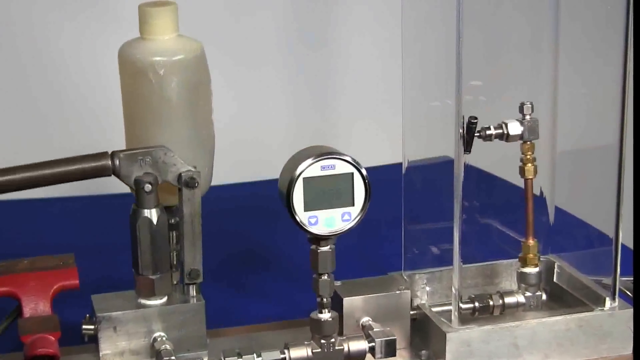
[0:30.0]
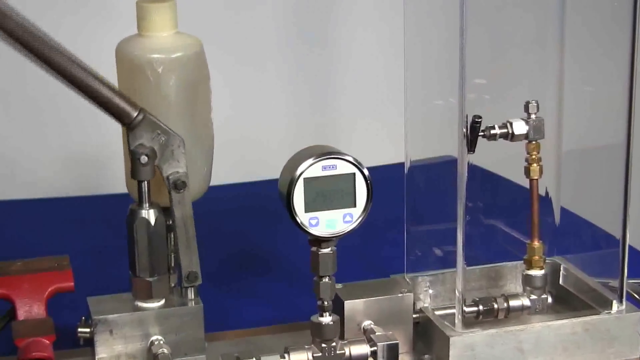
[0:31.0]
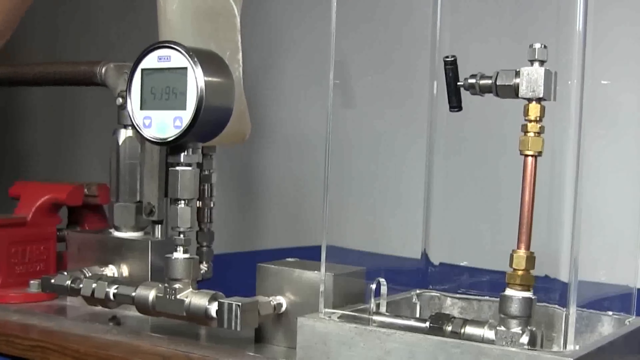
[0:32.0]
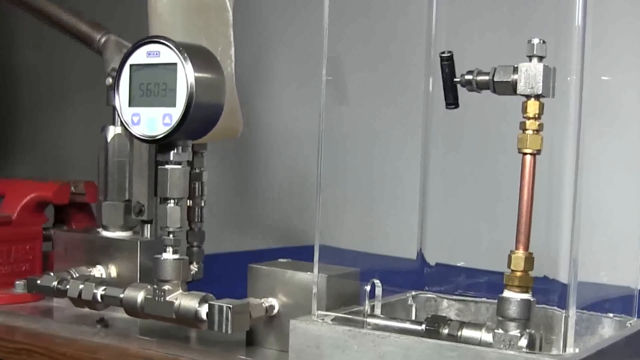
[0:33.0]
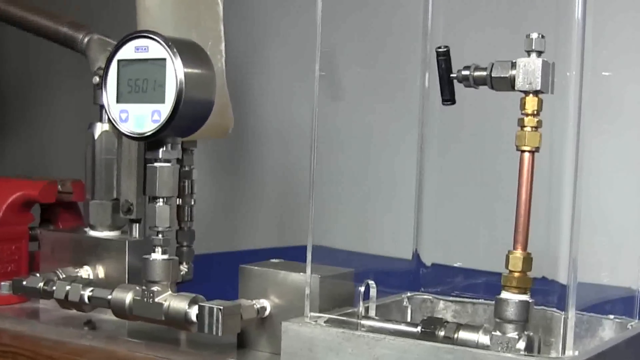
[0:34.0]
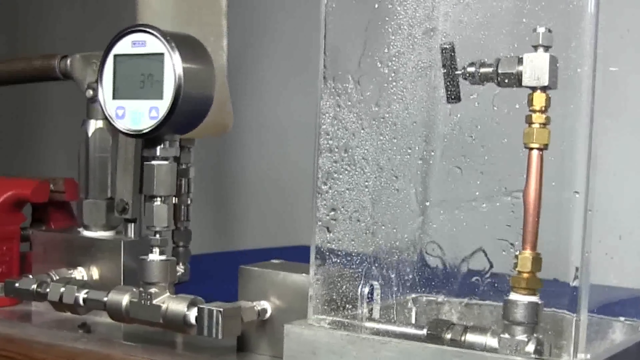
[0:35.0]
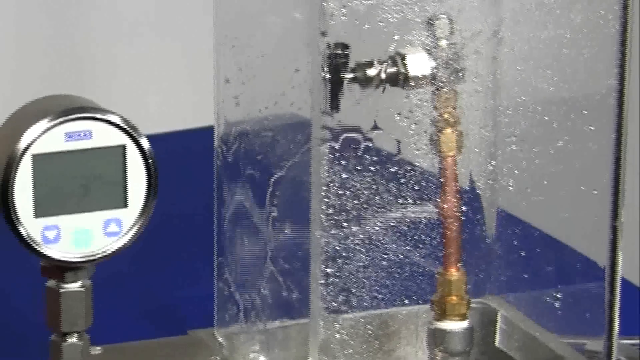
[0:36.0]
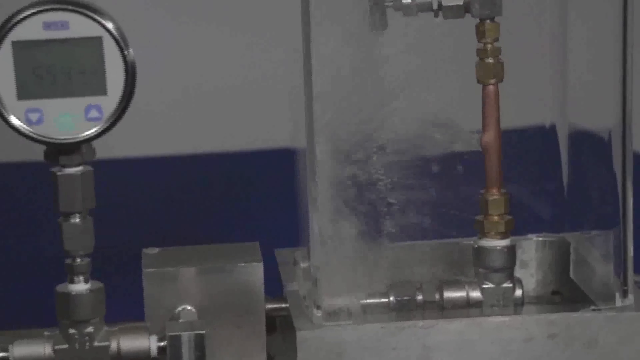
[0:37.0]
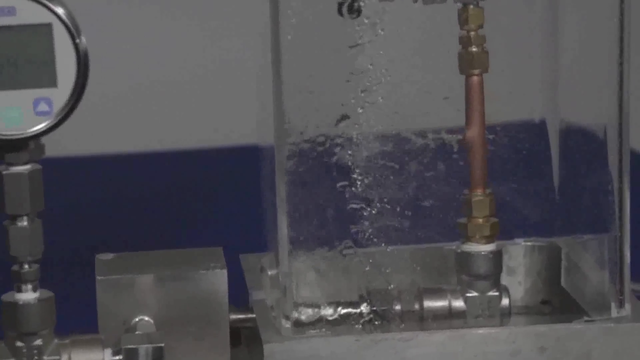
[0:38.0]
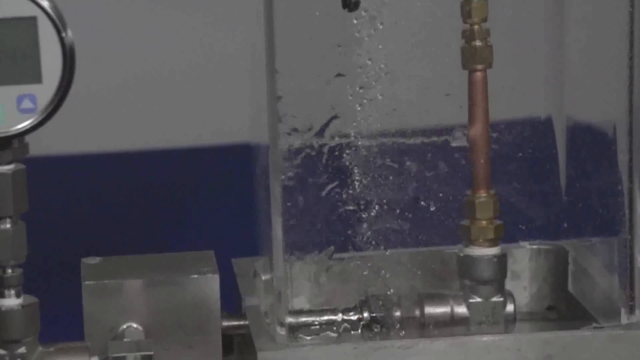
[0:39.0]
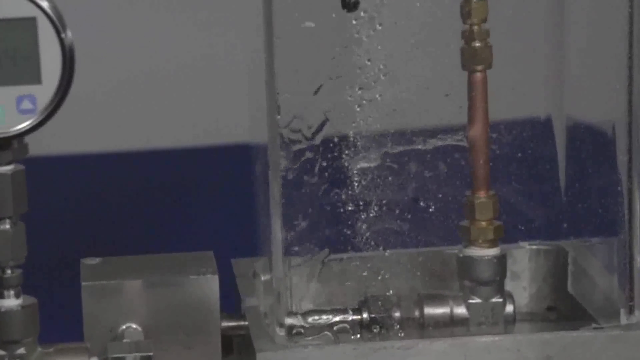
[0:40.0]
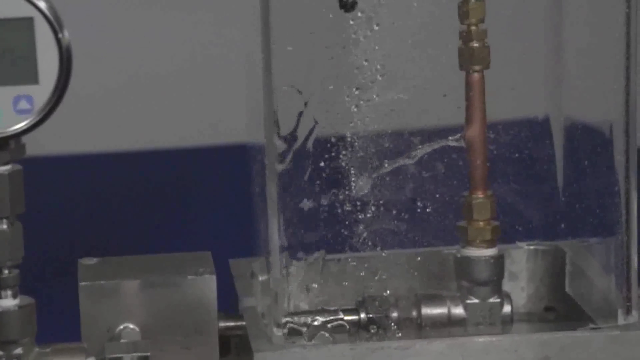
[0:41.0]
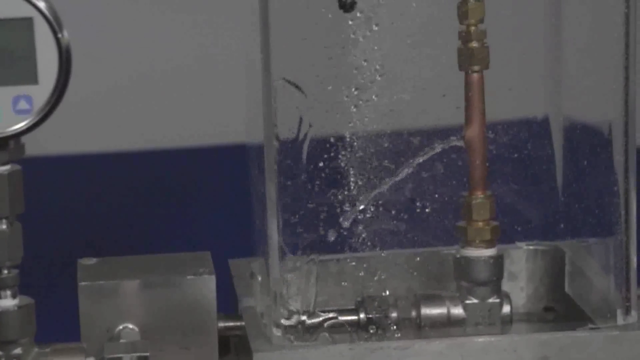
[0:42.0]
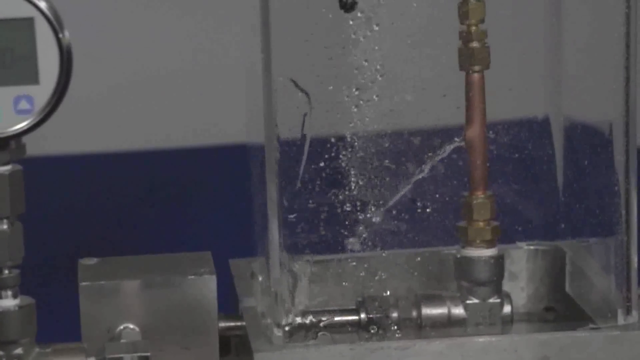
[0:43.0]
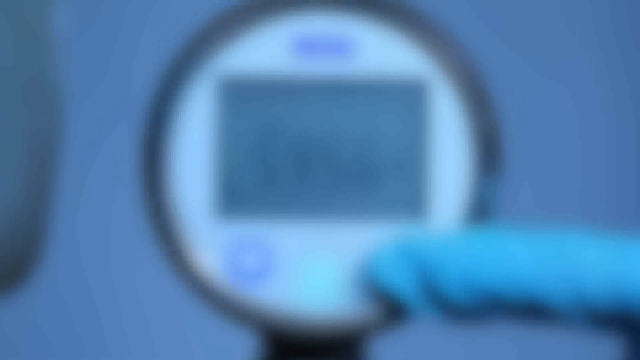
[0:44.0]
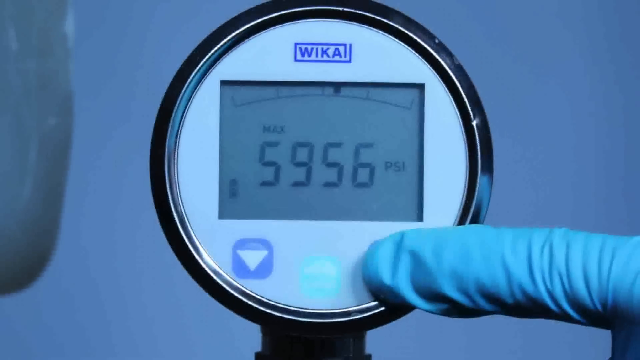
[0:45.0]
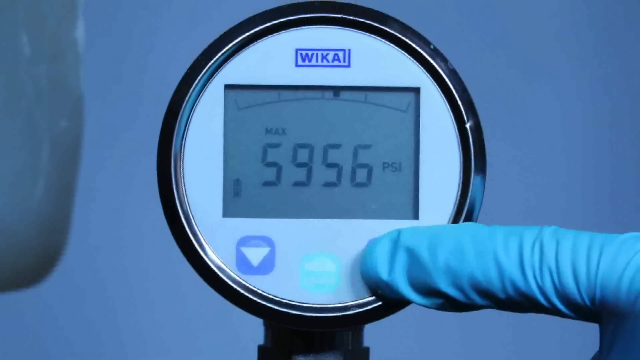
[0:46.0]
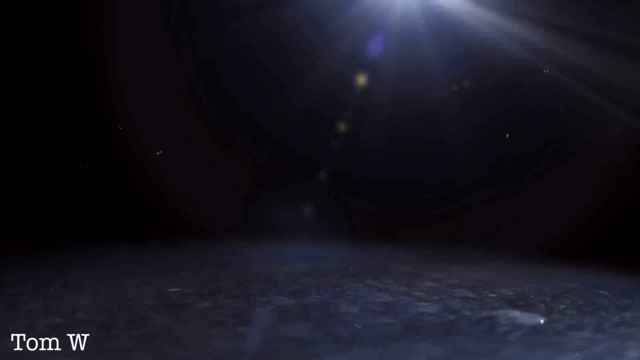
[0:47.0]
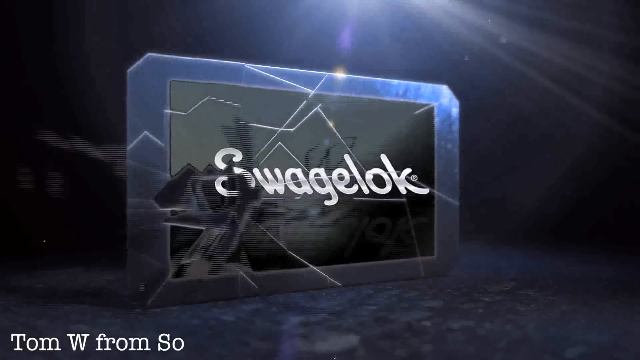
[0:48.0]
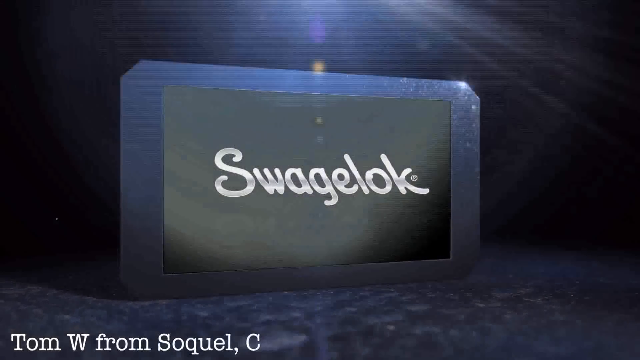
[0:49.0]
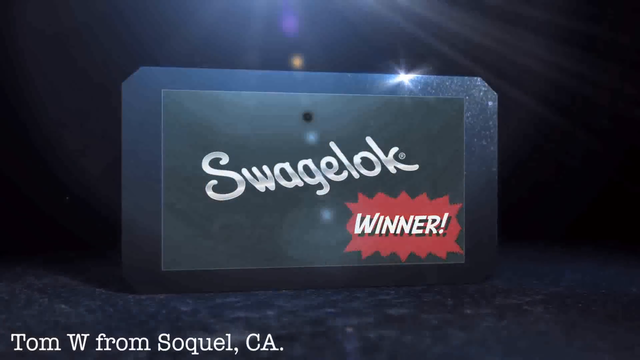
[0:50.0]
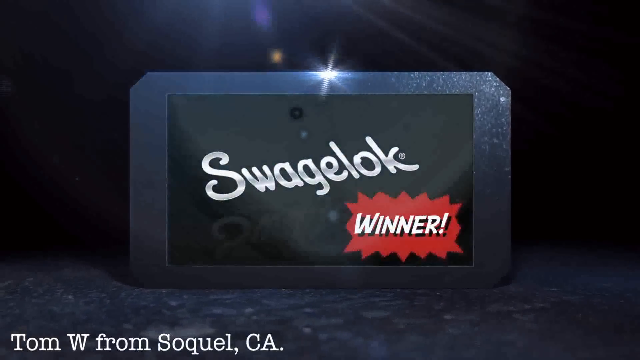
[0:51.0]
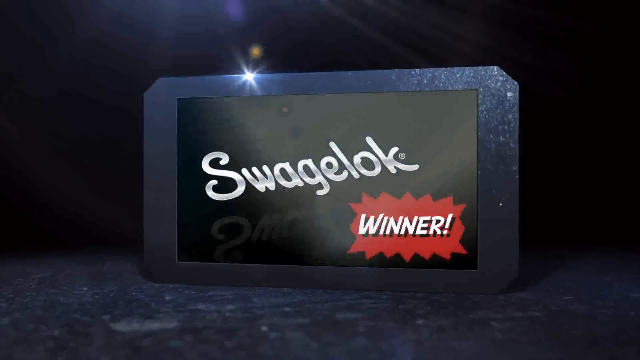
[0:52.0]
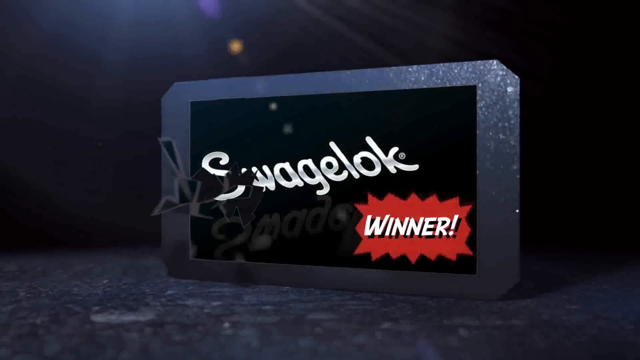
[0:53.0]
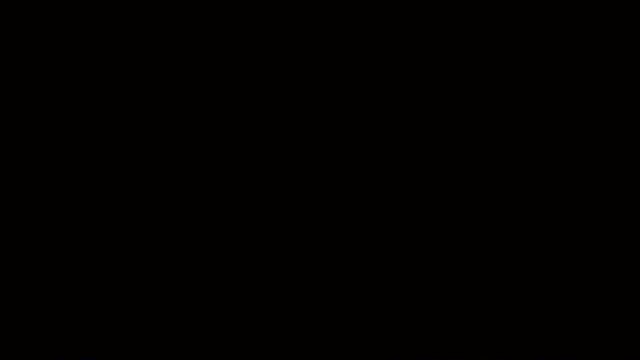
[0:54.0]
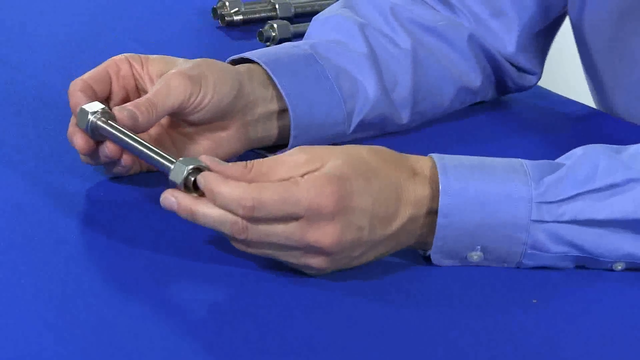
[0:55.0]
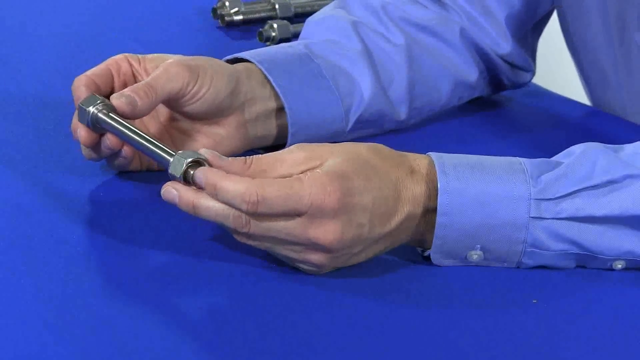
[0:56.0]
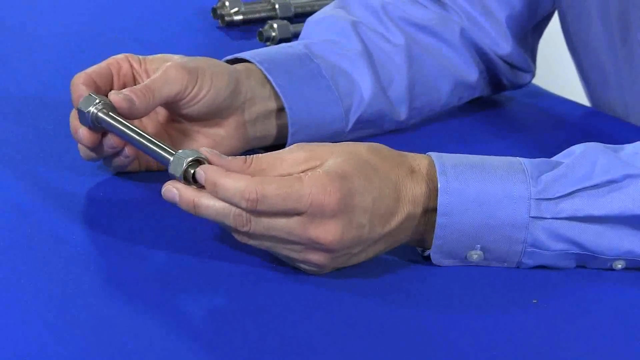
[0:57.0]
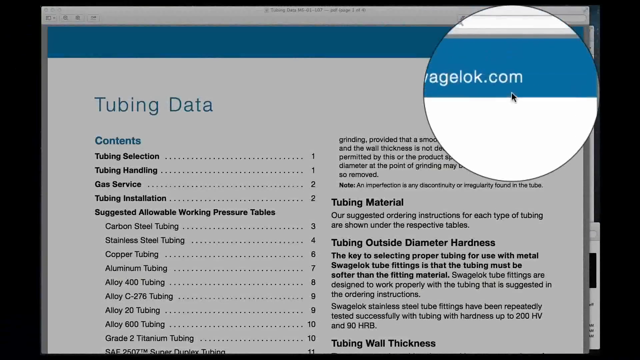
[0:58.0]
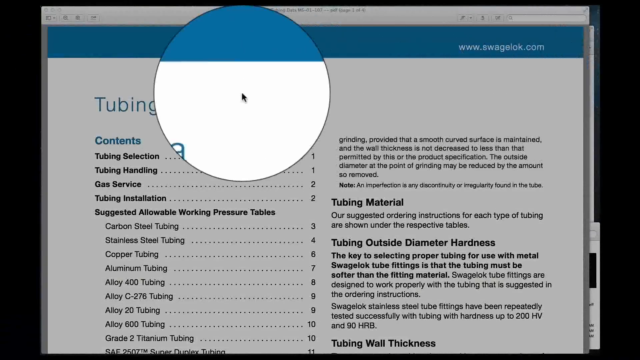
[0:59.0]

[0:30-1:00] Various plumbing devices are shown, including a pump with a gauge on it that seems to be a pressure gauge; the pump is being used to build up pressure in a pipe. Behind a protective plexiglass box or screen, a pipe is hooked up to look like a standard pipe with a shutoff valve, and the pressure is pumped up until a copper pipe bursts open and water sprays out of it. The Swagelok logo then pops up on an animated background, with "winner" in the corner. The man in the blue shirt looks at a piece of tubing on top of a table. What looks to be a page out of a manual reads "tubing data", with an index for different items on the individual pages.